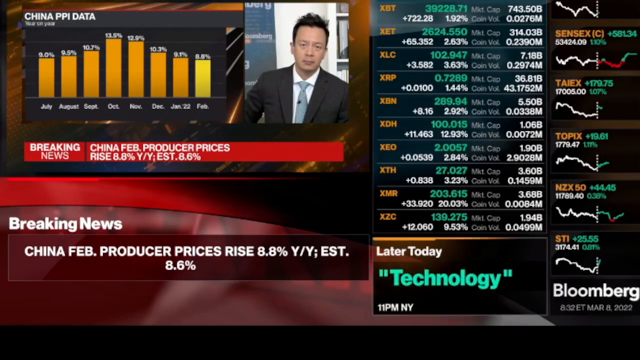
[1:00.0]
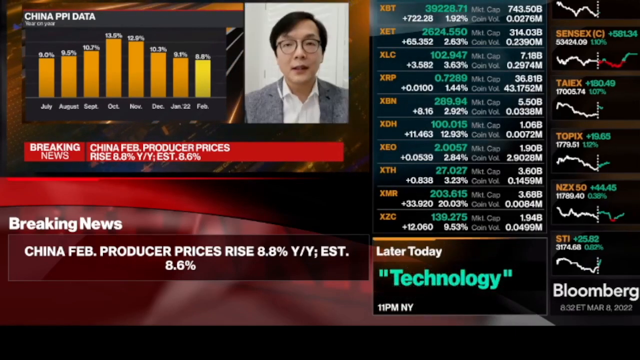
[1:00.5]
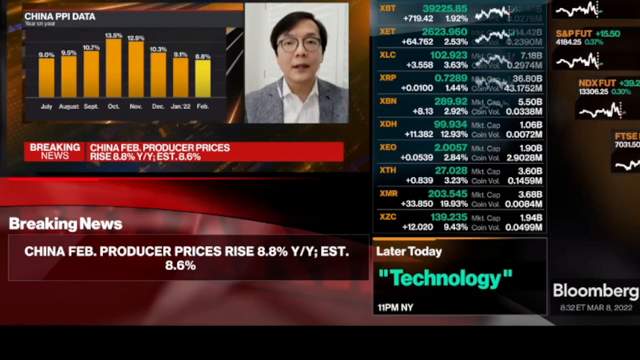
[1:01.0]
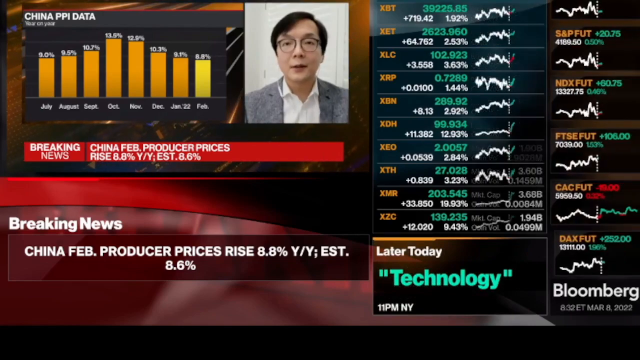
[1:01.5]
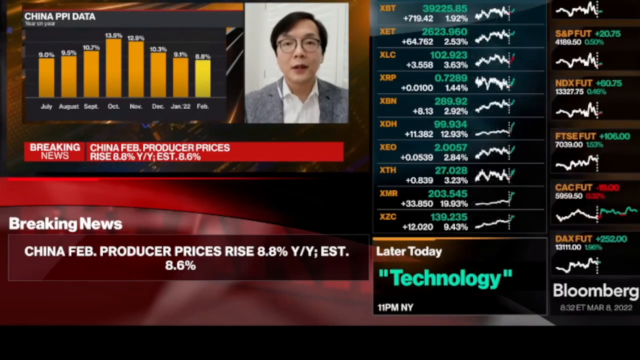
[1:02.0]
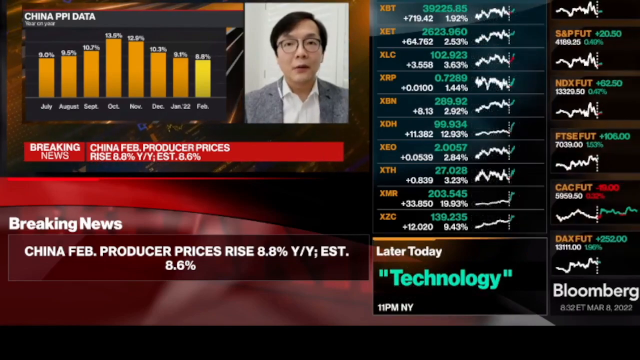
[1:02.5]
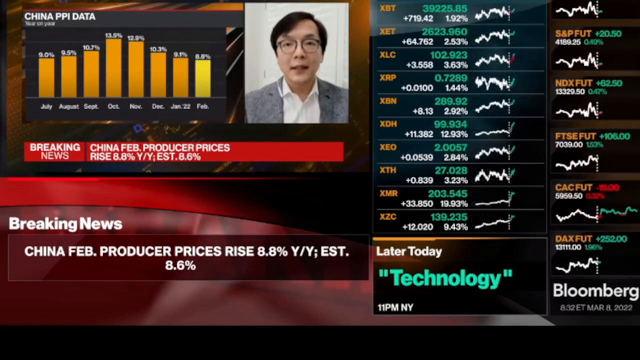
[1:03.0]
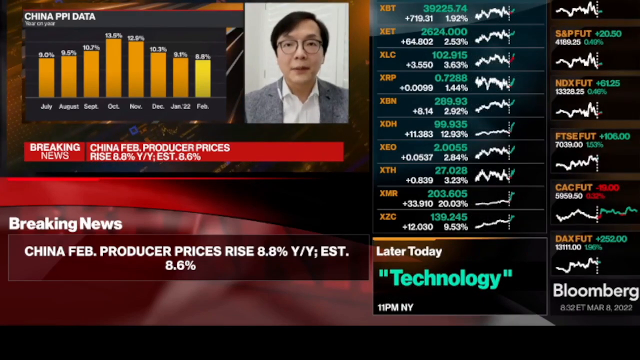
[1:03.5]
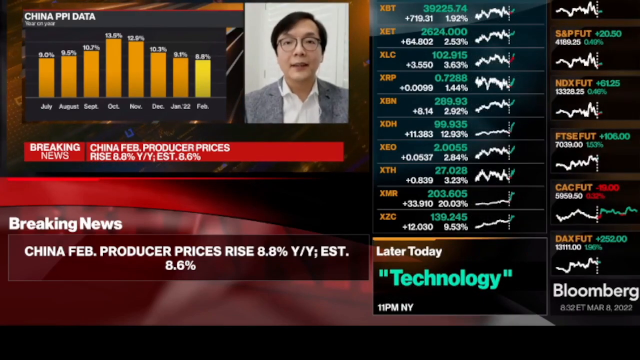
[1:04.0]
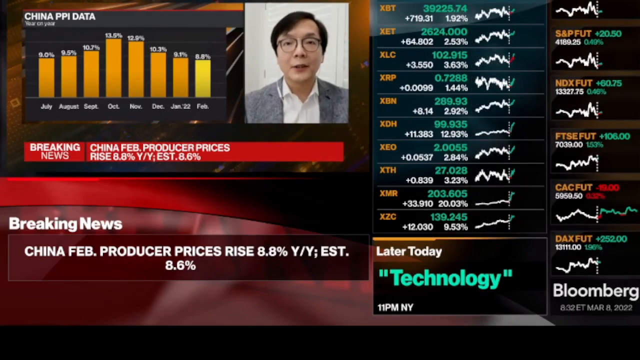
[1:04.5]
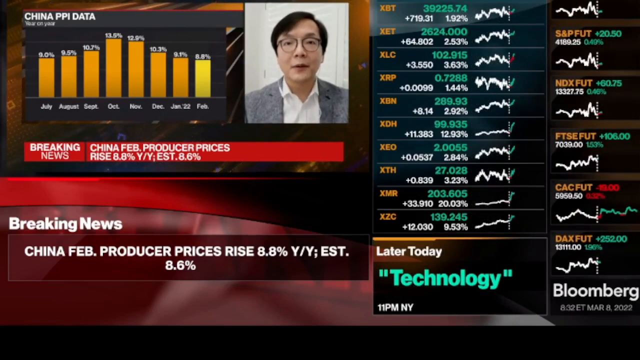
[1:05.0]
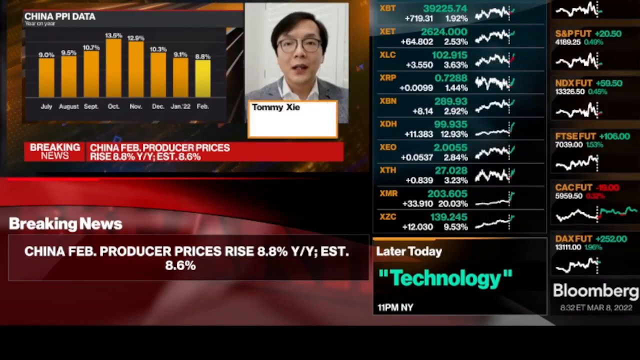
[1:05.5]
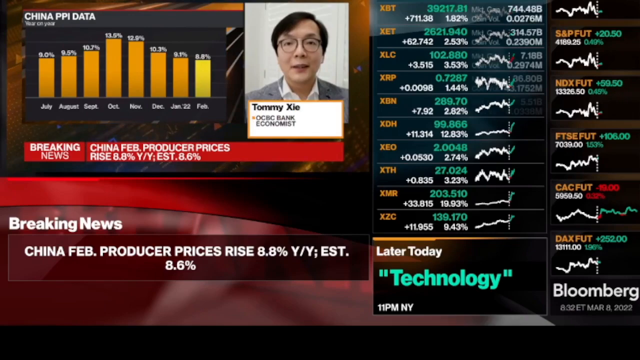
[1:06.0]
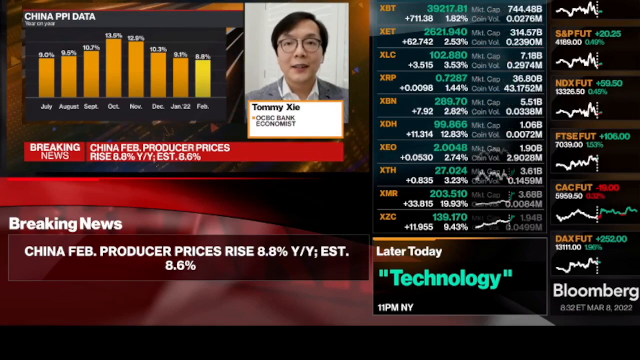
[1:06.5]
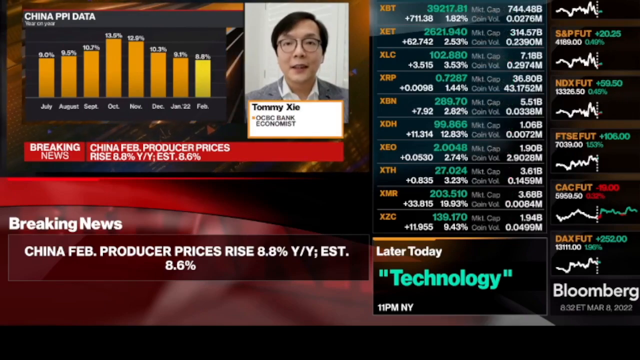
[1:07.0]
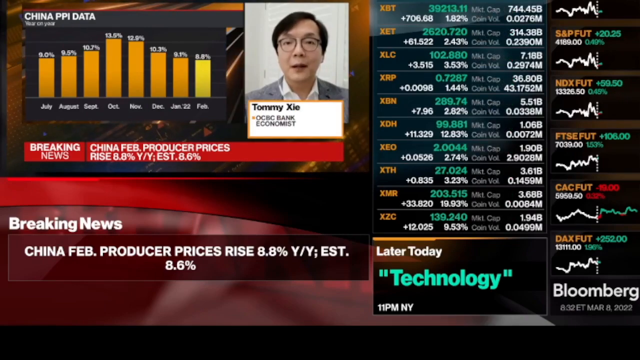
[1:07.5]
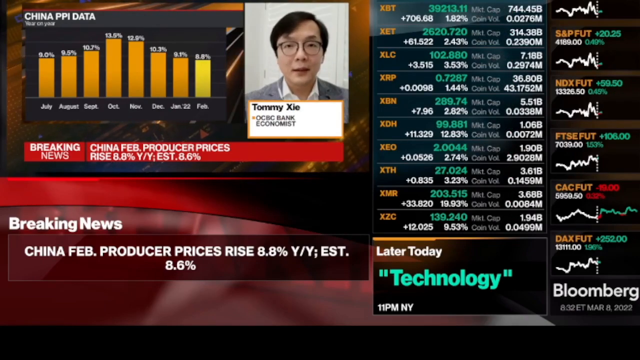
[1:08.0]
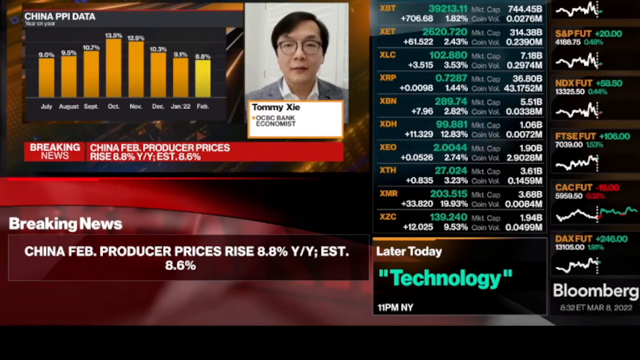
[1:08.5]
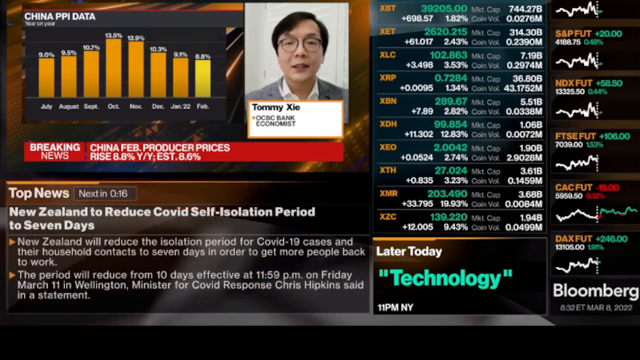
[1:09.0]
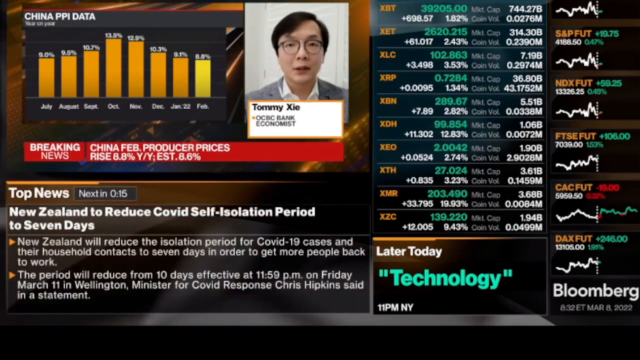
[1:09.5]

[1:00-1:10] A new program called Technology is shown in the Later Today section, scheduled for 11 p.m. New York time. Tommy is seen speaking to the right of the China PPI data bar graph, with his name and title shown on the screen. New stocks and currencies appear on the screen. The screen also shows that the next news section will begin in 15 seconds. Its topic is that New Zealand should reduce the Covid self-isolation period to seven days, with two bullet points underneath about New Zealand reducing the isolation period and how it will reduce to 10 days on Friday, March 11th.